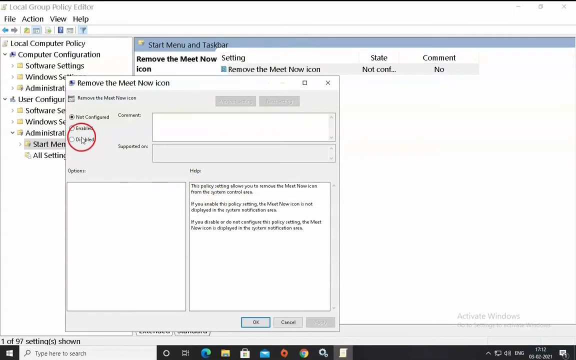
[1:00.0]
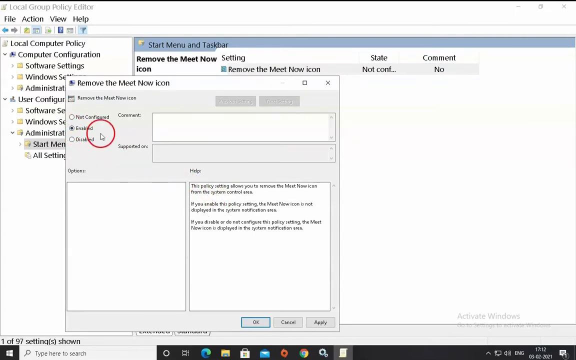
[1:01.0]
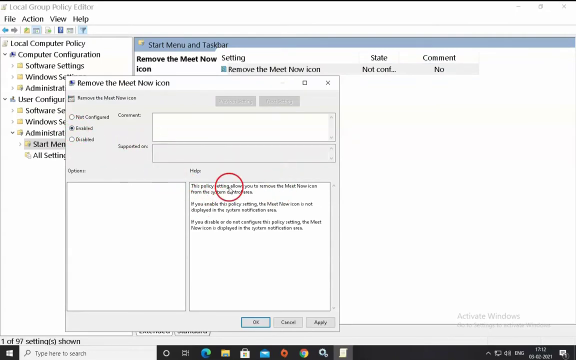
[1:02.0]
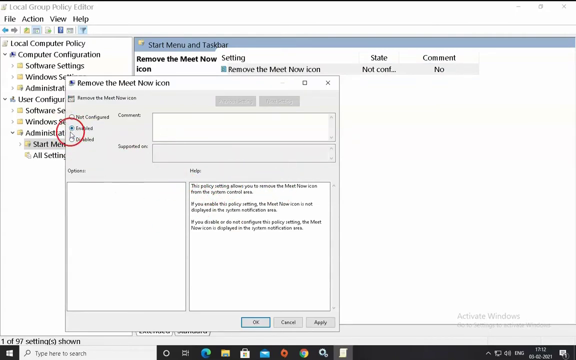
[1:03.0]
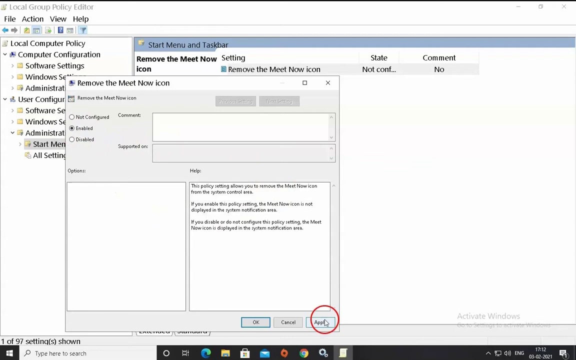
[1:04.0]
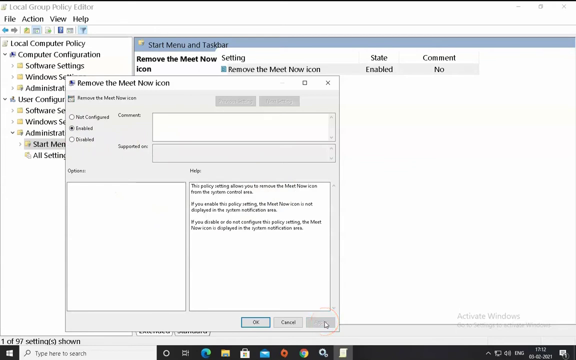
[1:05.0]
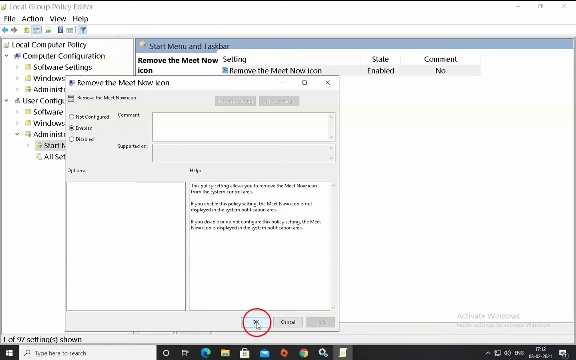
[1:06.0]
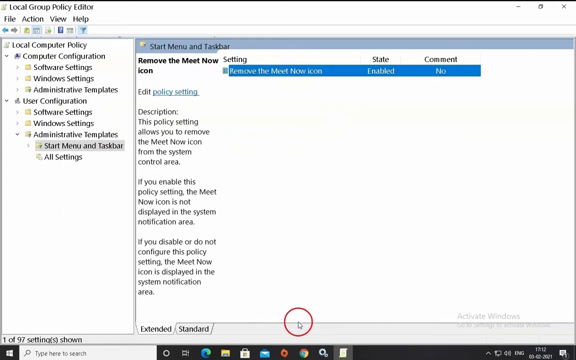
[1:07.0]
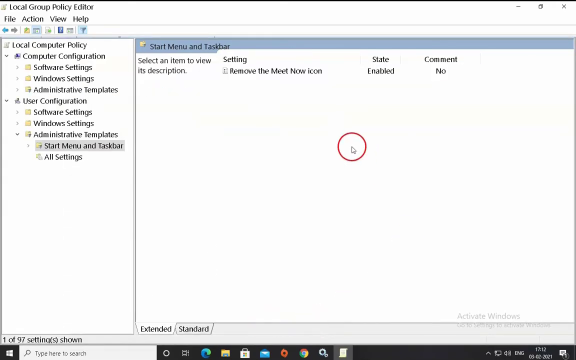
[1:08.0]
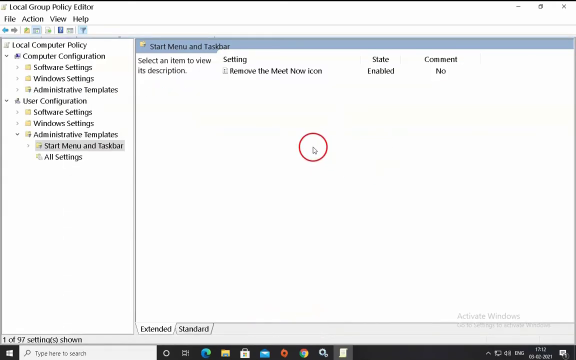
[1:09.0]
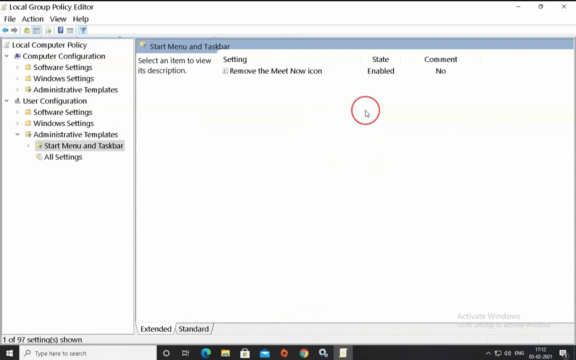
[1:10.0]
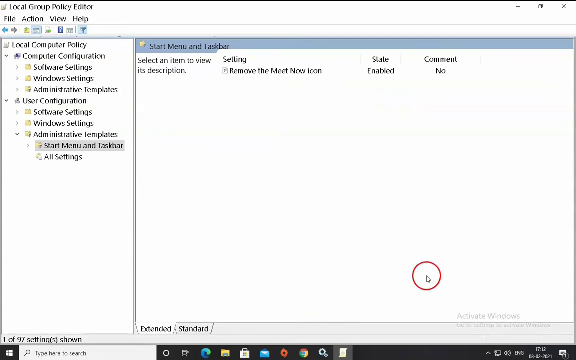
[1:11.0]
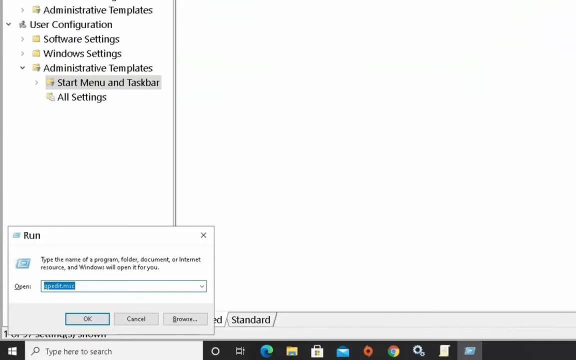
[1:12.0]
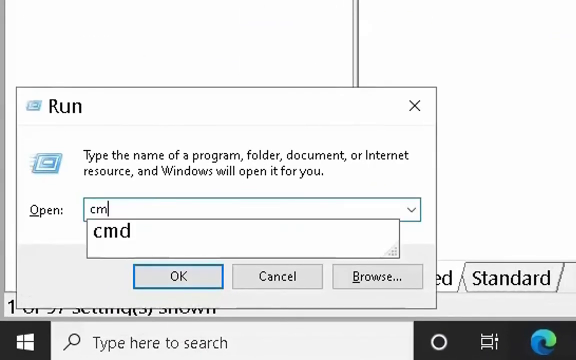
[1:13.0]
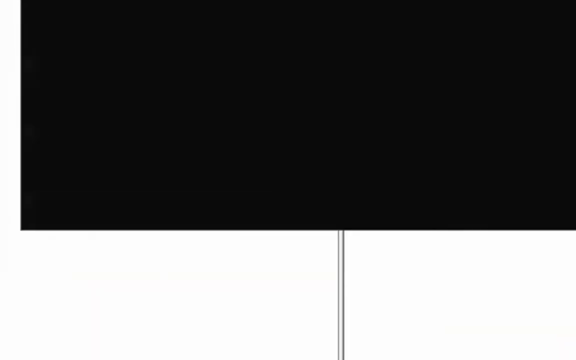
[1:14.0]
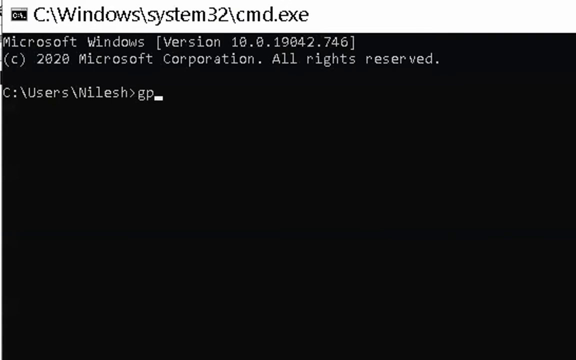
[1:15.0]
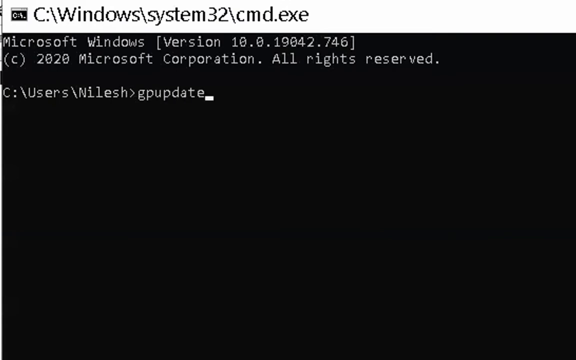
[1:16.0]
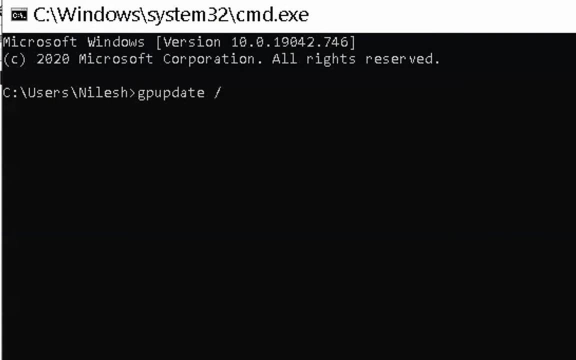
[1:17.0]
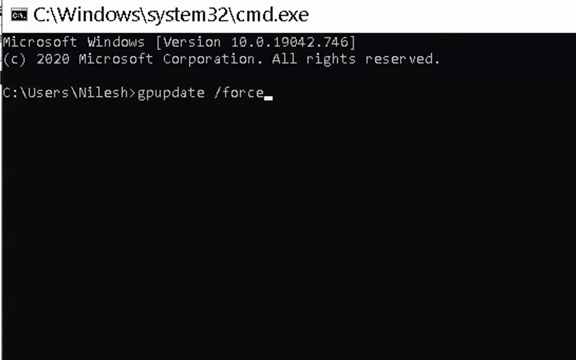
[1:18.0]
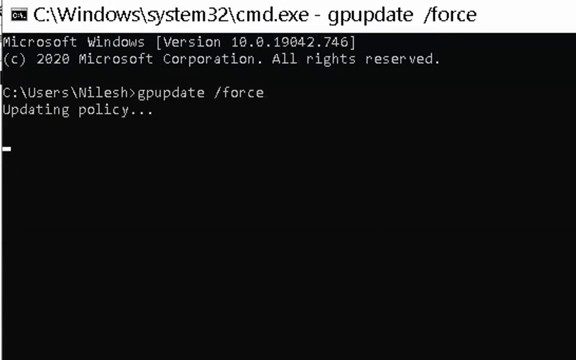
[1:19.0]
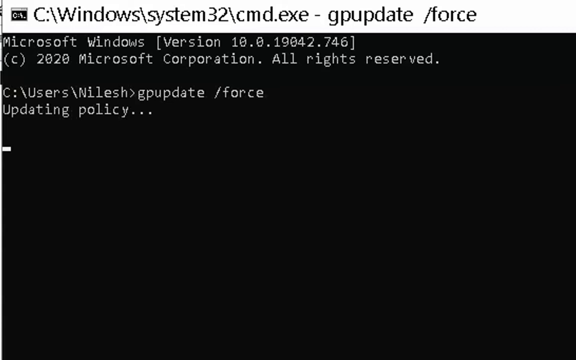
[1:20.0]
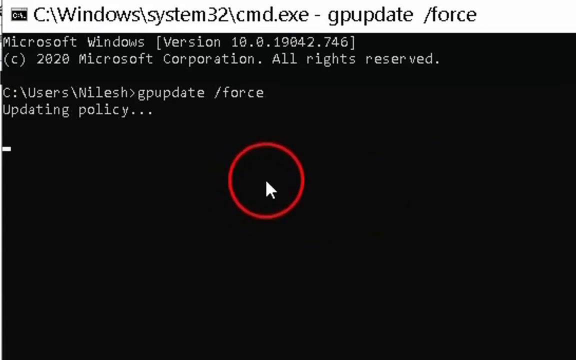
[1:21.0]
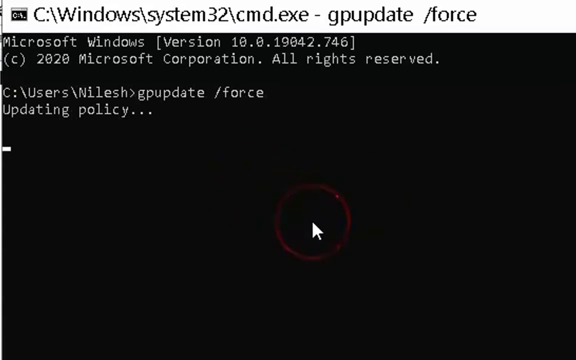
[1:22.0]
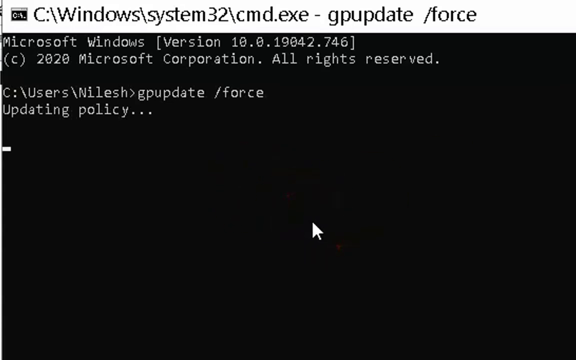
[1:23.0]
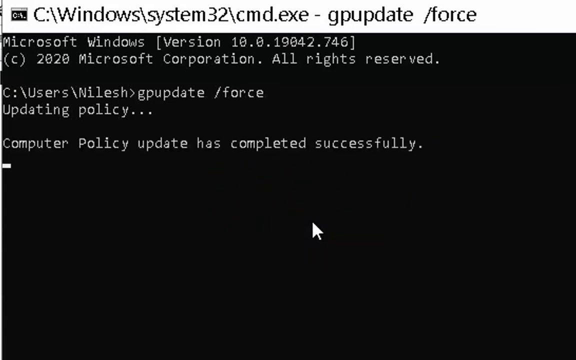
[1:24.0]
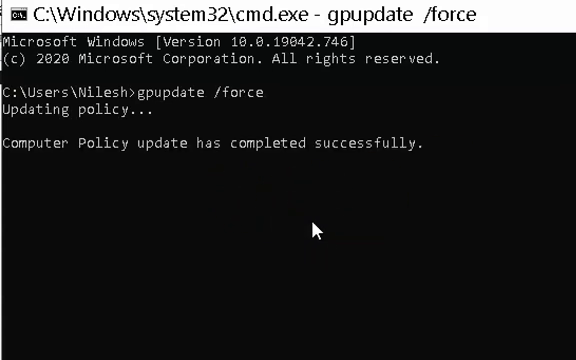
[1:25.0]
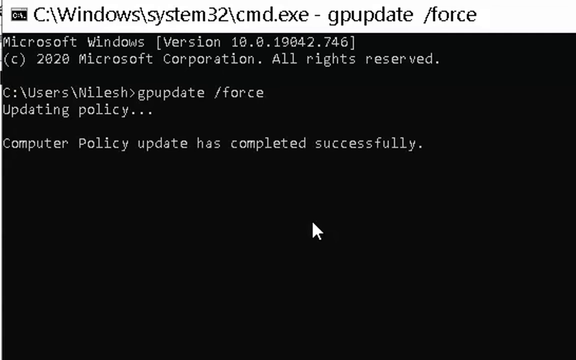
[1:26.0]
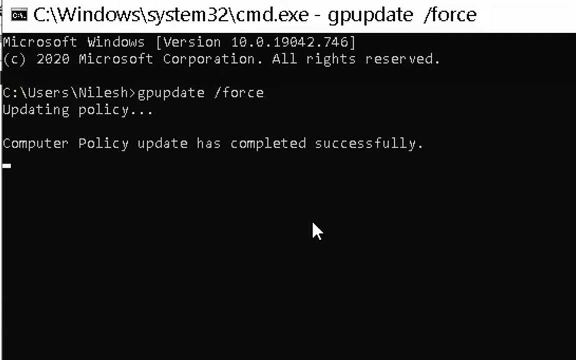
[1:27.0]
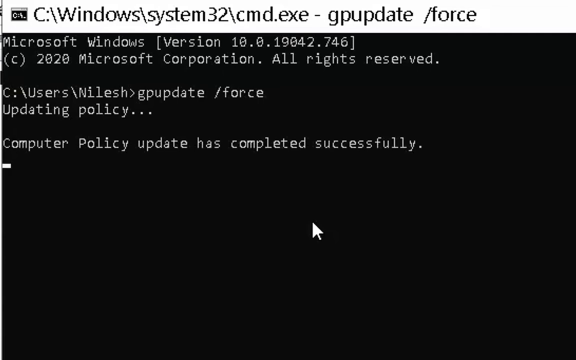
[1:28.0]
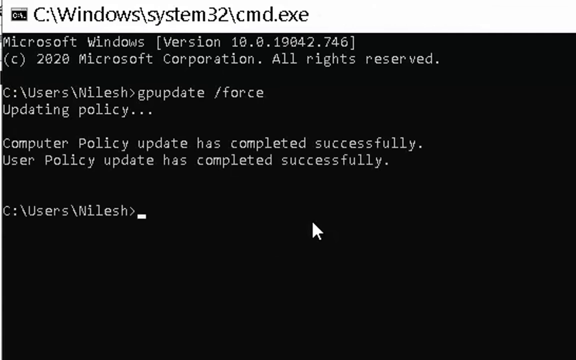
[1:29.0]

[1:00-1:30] The computer screen shows the motion of a person editing and changing things in a program: they are typing and moving the mouse pointer around quickly, and they seem to know what they are doing. There are about 15 files on the screen. The words on screen are mostly names of files, and there are no images other than the words and no people, just different files and tabs on the page. They have clicked on the "remove the meet now" icon.